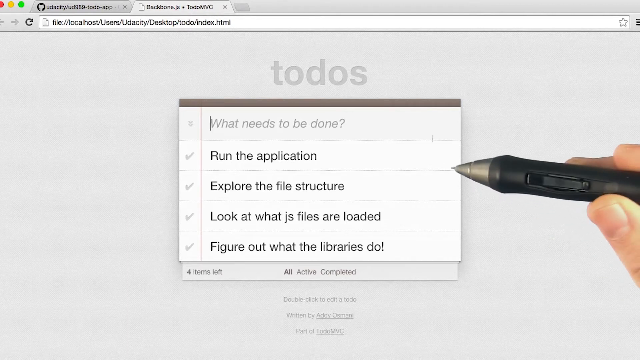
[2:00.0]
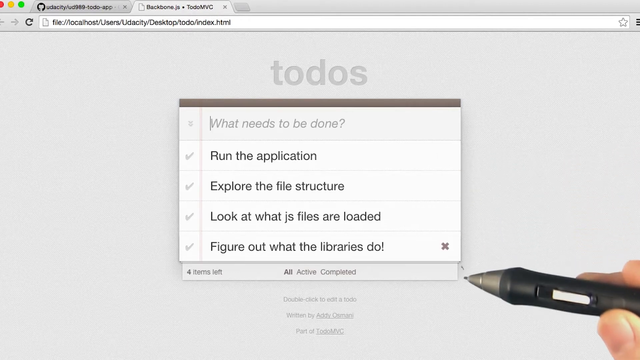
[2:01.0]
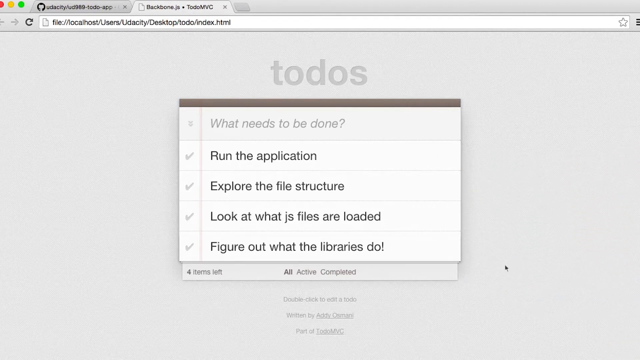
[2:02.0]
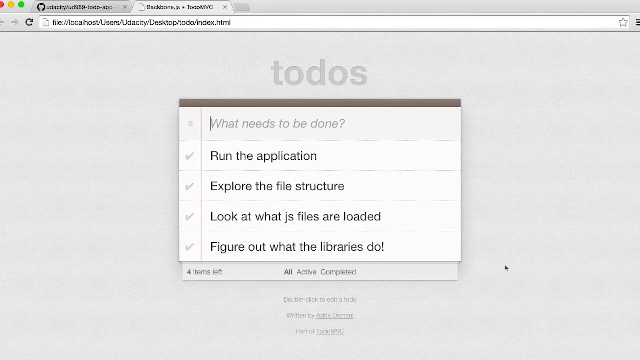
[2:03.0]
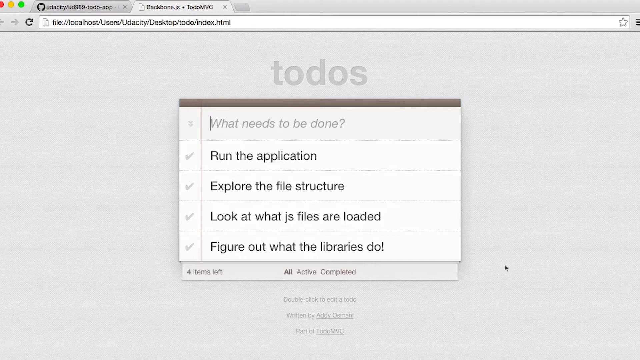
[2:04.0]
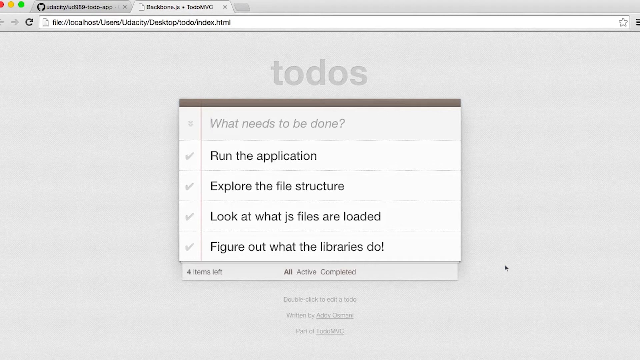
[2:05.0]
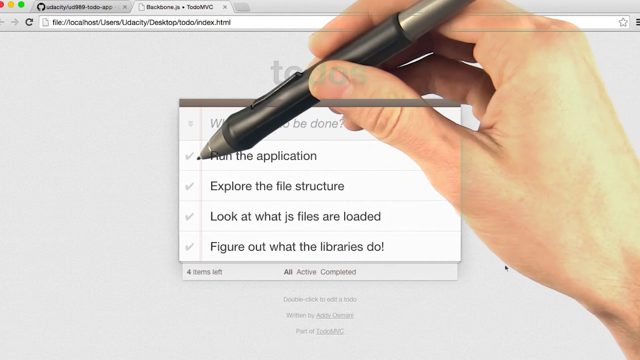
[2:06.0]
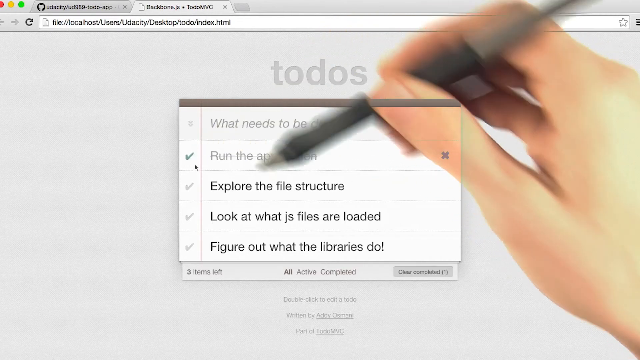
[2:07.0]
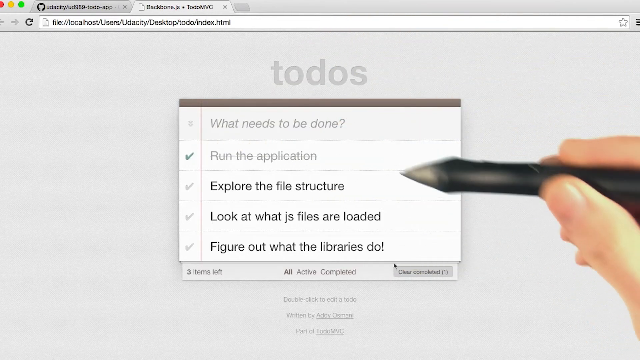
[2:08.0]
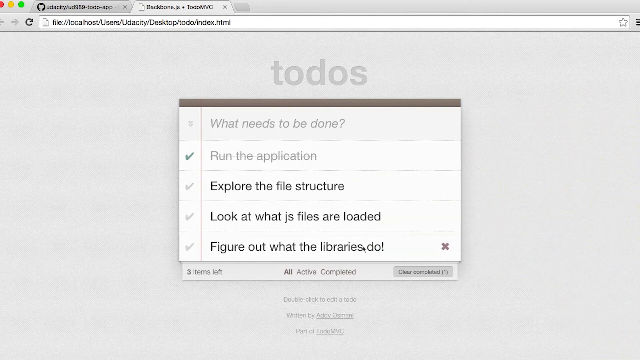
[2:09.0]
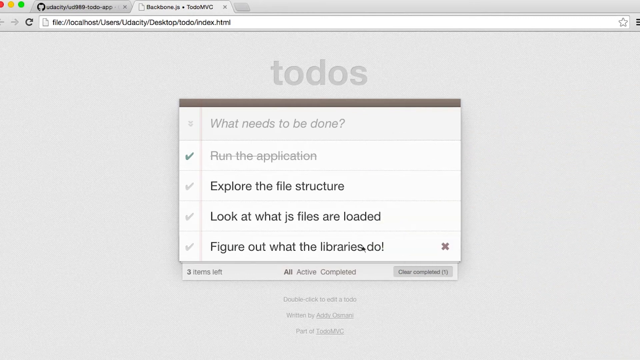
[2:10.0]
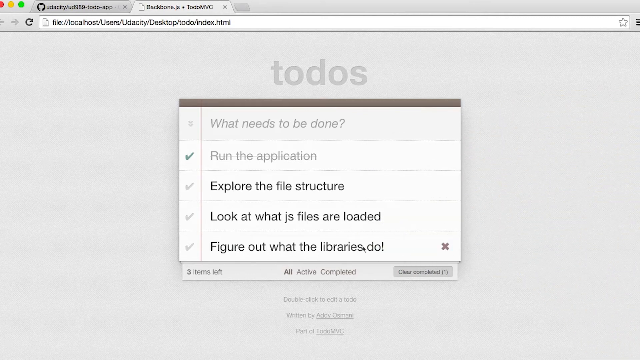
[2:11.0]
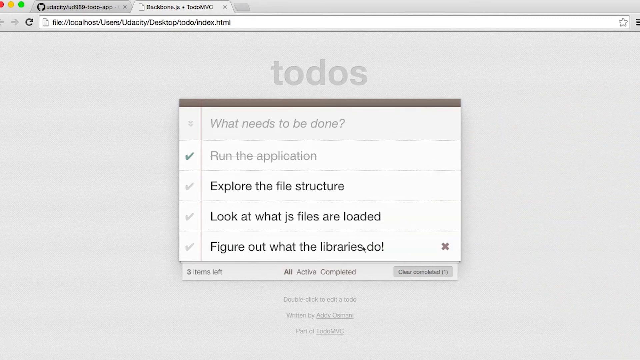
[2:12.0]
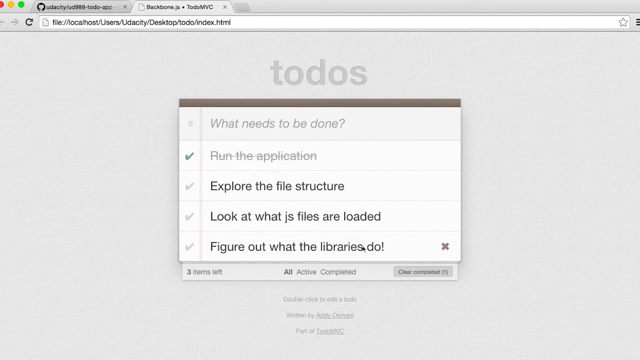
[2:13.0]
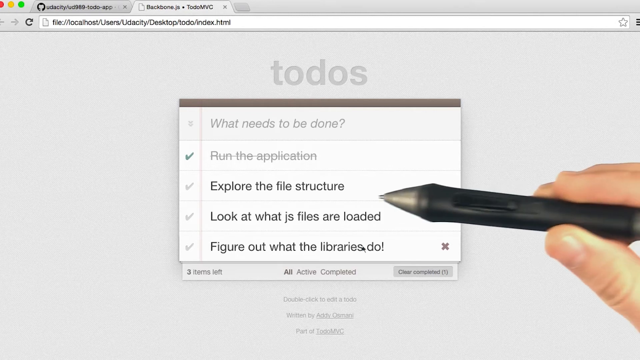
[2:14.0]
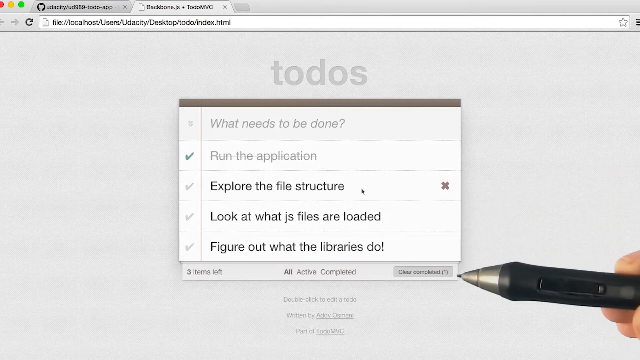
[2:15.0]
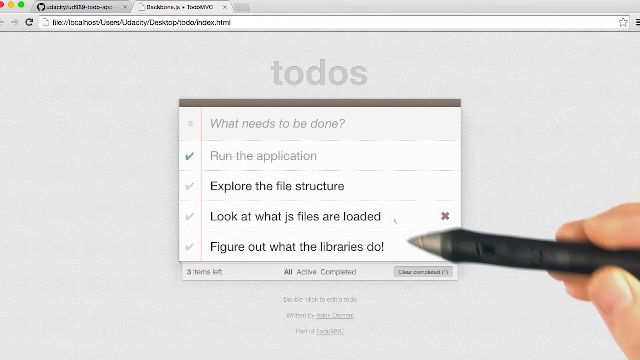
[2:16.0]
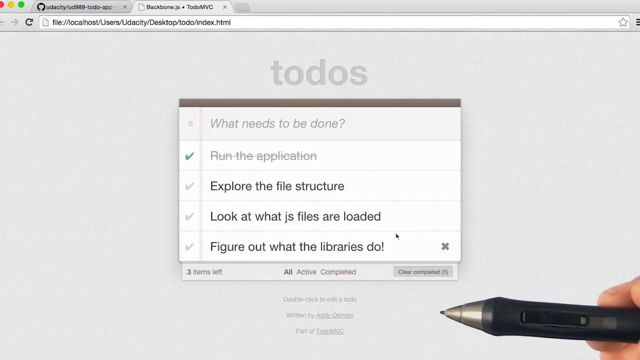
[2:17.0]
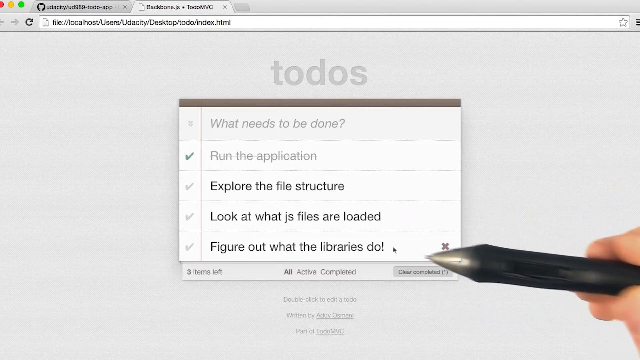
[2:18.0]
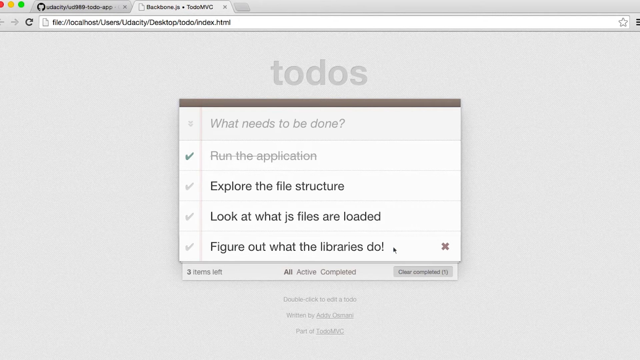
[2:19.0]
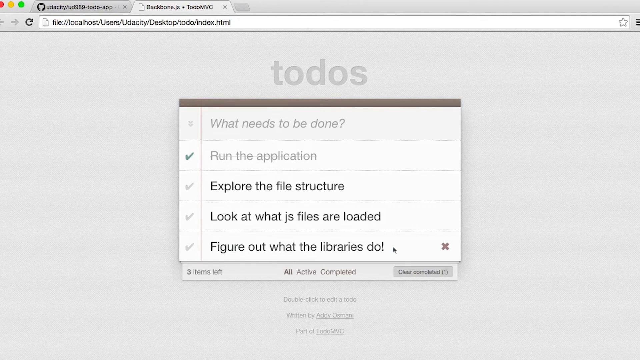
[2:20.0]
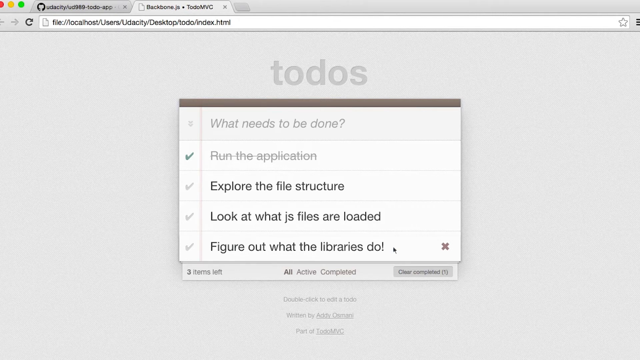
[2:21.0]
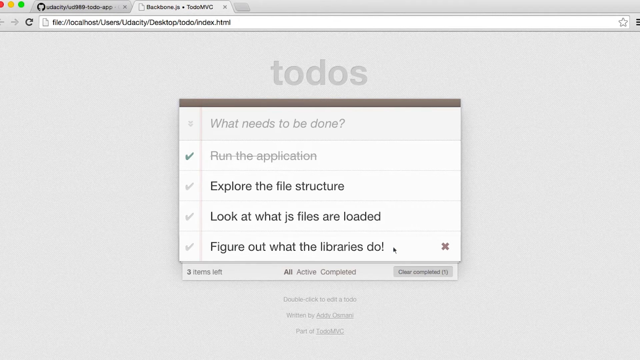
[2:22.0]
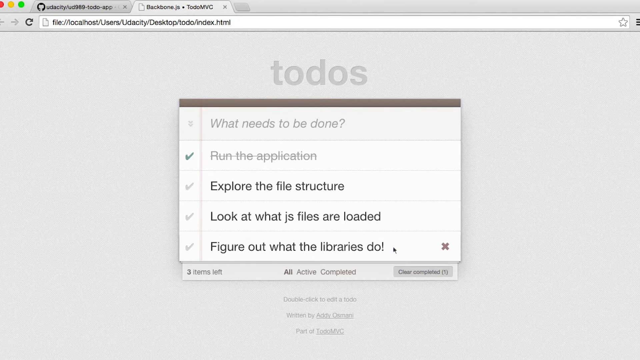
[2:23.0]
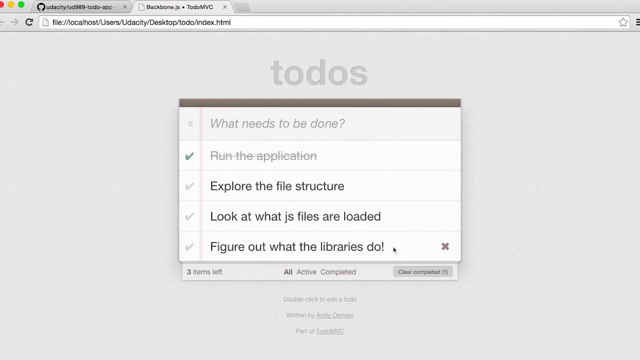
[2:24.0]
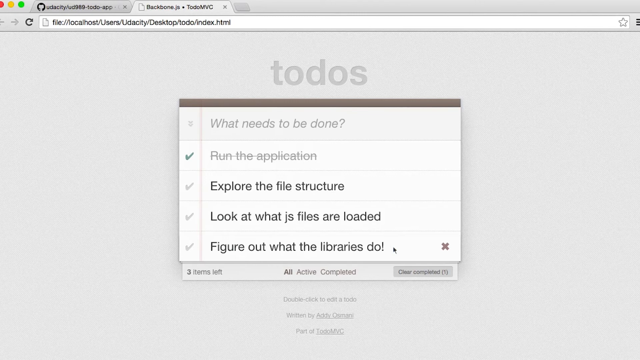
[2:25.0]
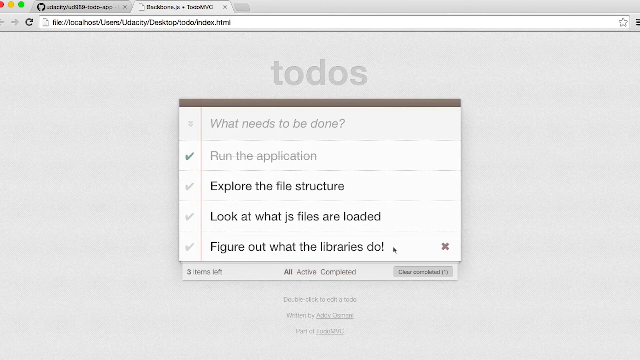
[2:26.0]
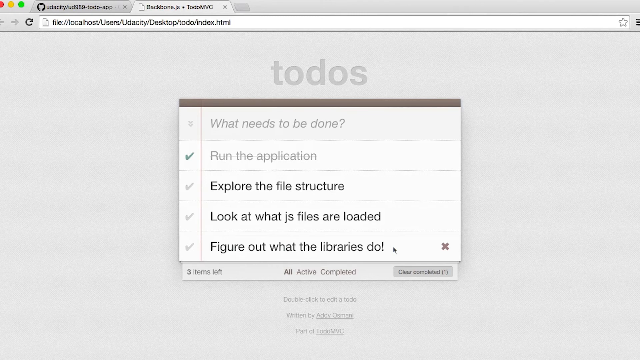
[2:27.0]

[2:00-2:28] The browser is still open with two tabs, to the GitHub website and the local host file. The sentence box shows "run the application" below the typable sentence line, below that "explore the file structure", below that "look at what JS files are loaded", and below that "figure out what the libraries do!". A hand appears from the right side of the screen and moves a pen down each line next to those sentences, and as it does, an X pops up on the right side of each sentence. The hand disappears, then reappears; next to the running application sentence something is pressed and a green checkmark pops up. With the pen, the hand motions toward each of the sentence lines in a circular motion. At the end of the video, the hand disappears to the bottom right of the screen.